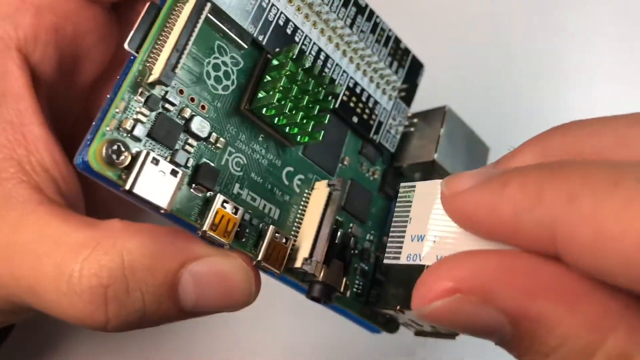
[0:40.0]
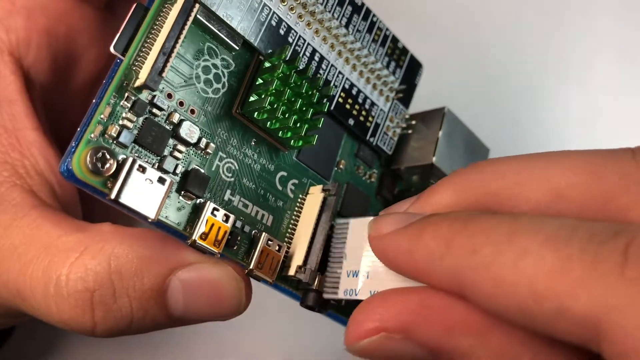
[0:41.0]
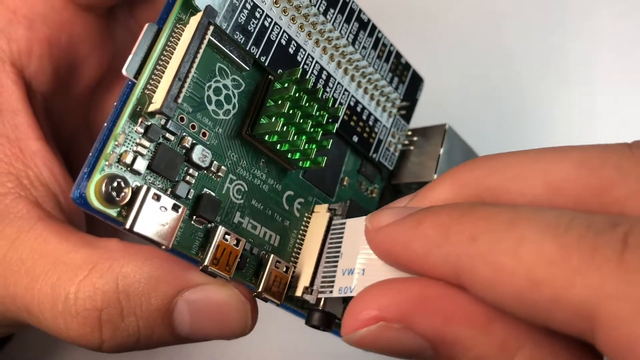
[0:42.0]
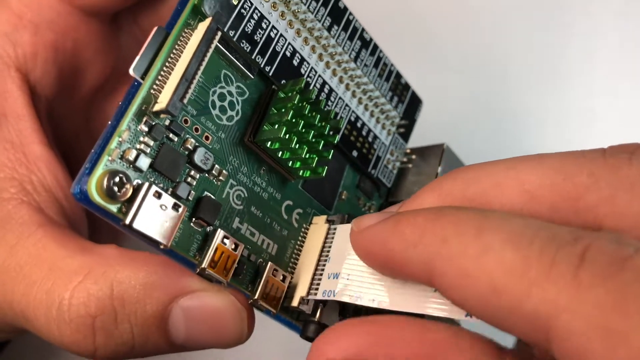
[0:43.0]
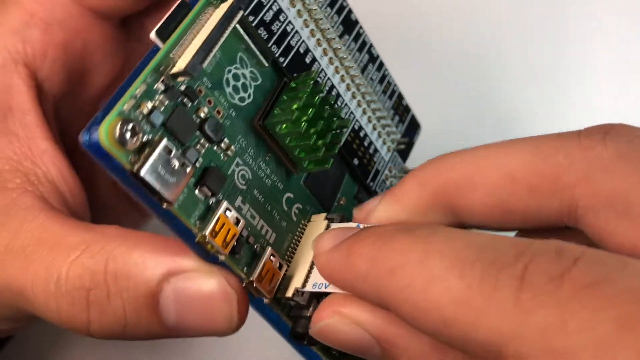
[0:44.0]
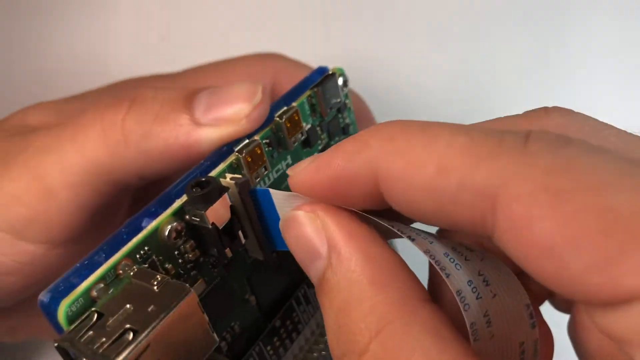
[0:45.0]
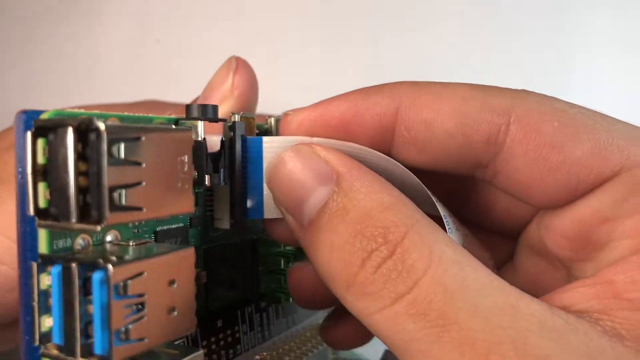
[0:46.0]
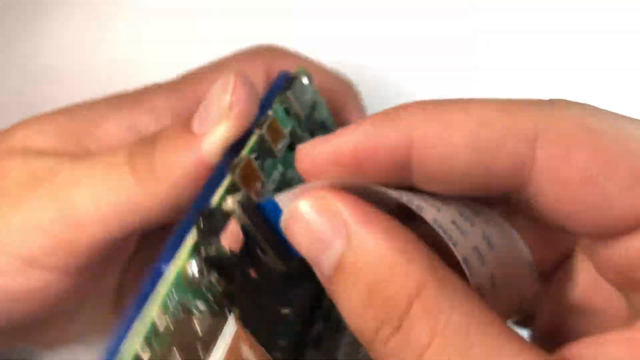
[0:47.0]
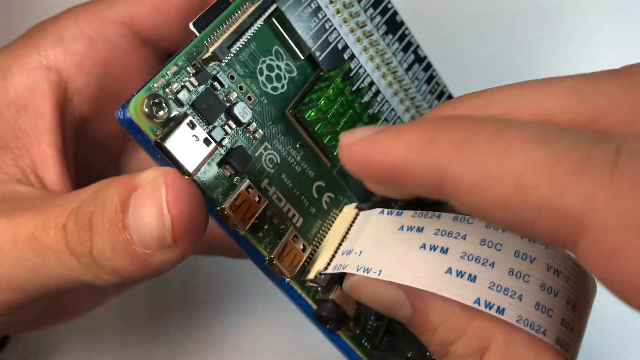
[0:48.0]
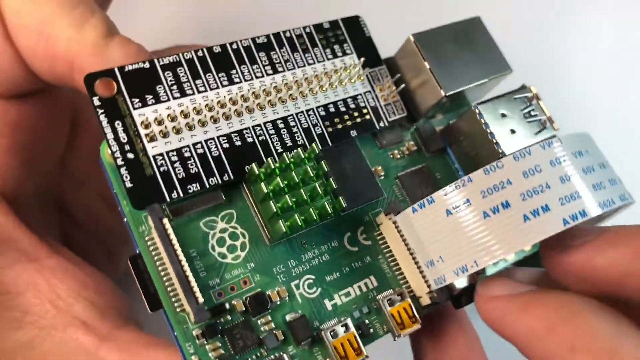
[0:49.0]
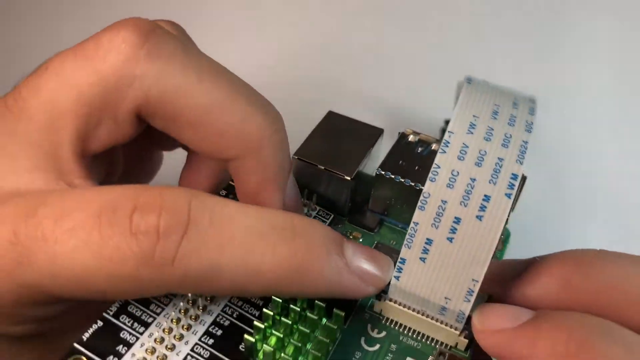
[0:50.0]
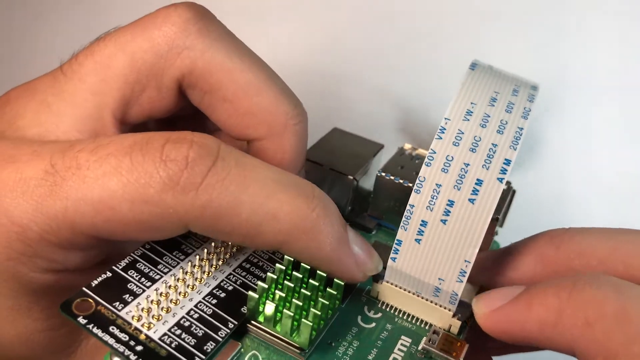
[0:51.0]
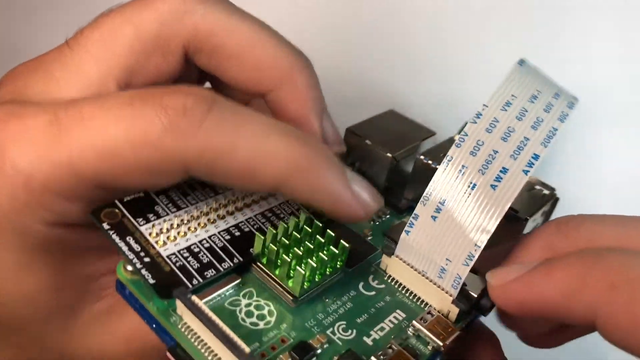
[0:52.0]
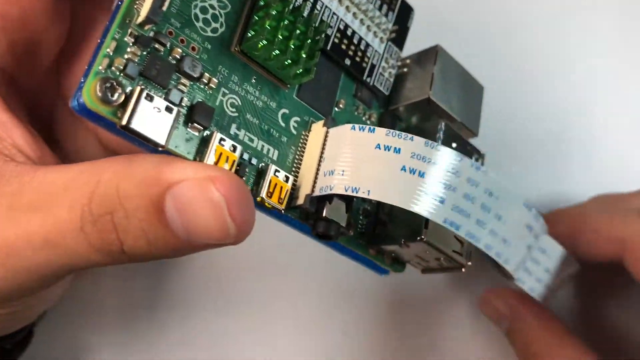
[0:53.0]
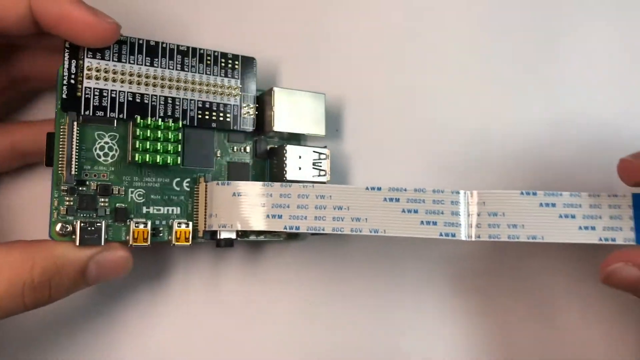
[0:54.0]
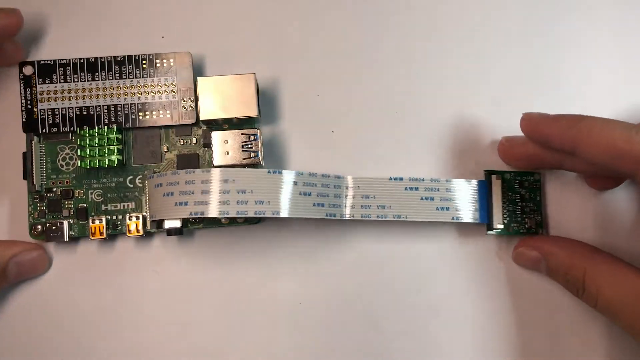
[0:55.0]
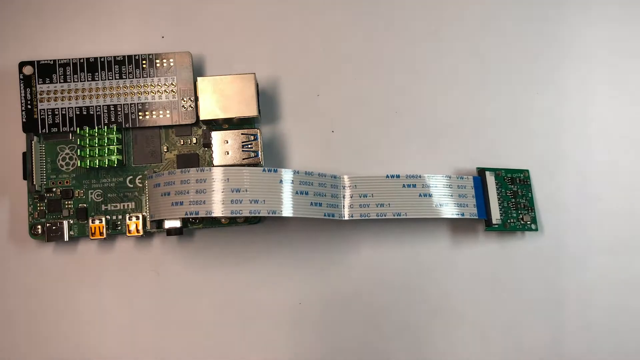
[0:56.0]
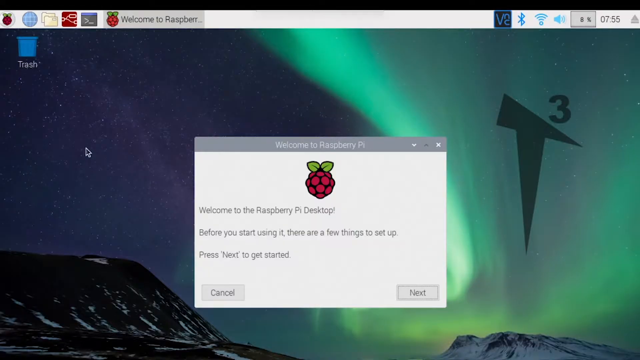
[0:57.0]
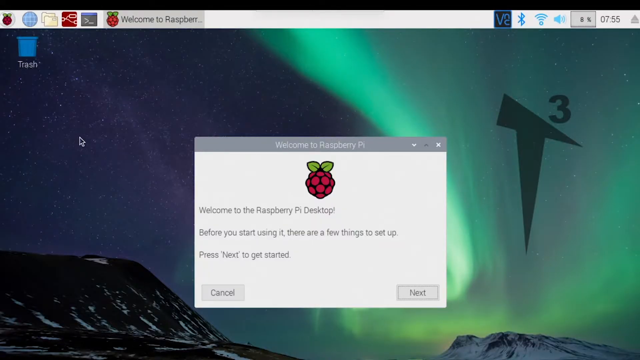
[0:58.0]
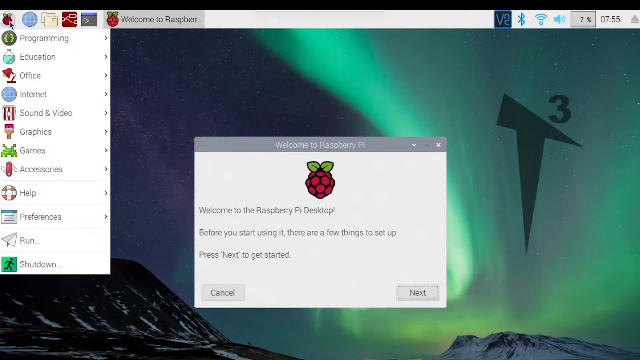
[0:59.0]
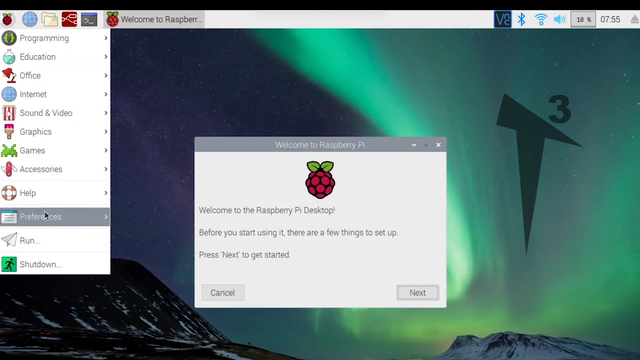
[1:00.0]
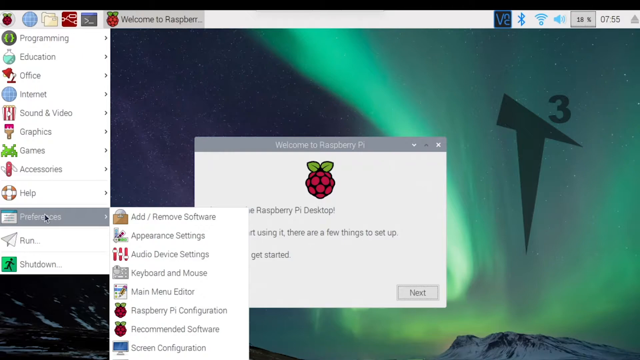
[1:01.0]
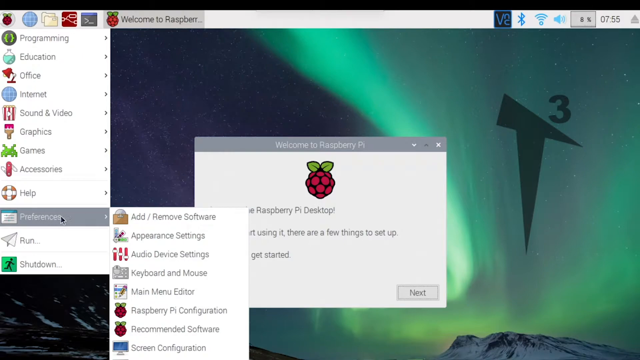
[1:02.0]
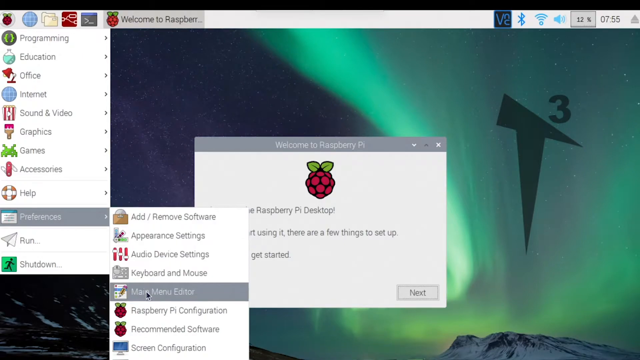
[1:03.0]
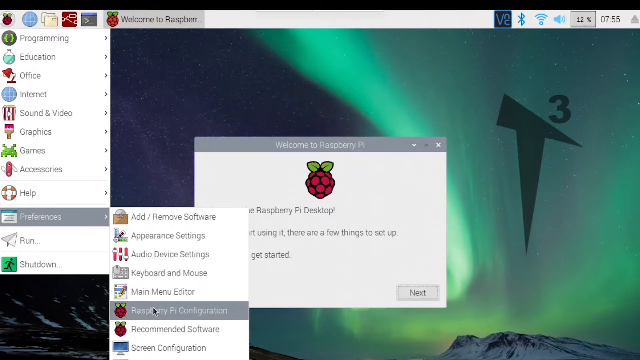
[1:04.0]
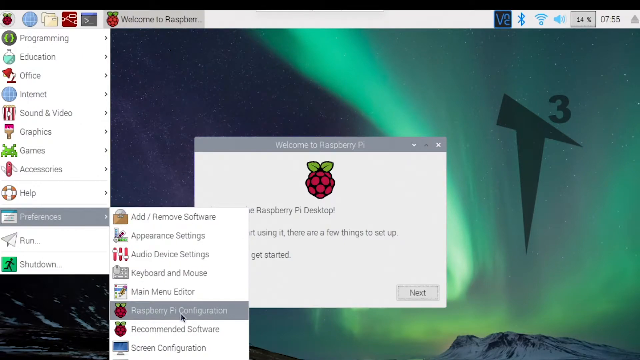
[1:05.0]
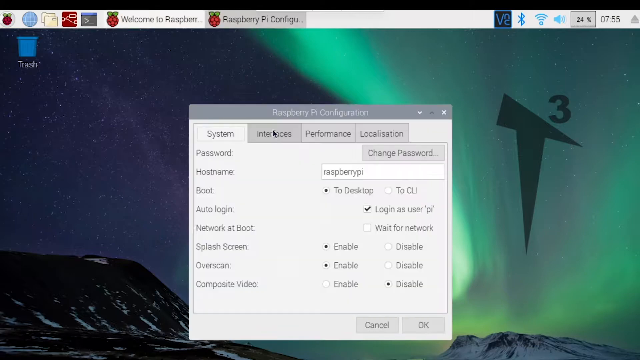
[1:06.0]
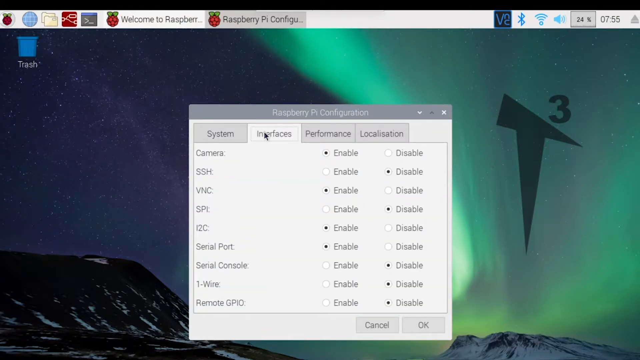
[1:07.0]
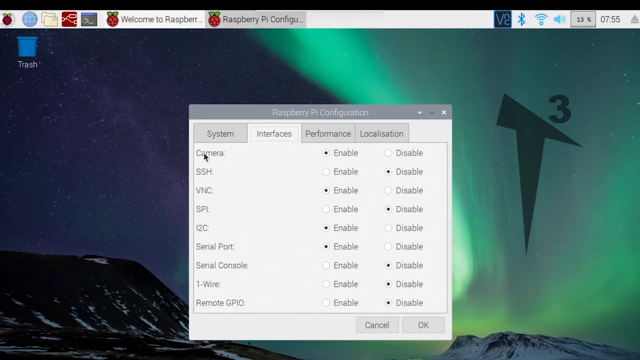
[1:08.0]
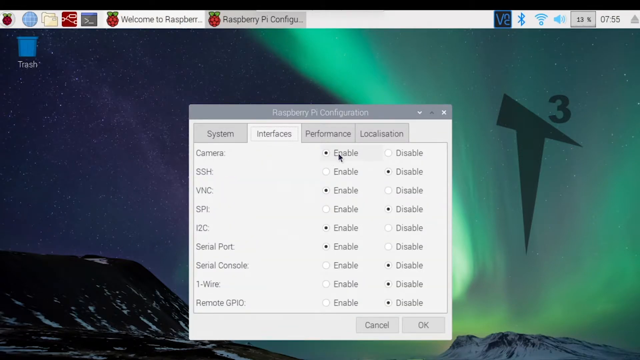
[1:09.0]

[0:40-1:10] The right thumb, index finger and middle finger are on the white piece of tape, which is held up to the circuit board while the left hand, with the left thumb visible, holds the board. The tape is put into a slot on the board. The left hand flips the board upside down as the tape is inserted, showing that the back side of the tape is white with a blue tip at its very first part. The board is flipped back to the front side, showing the tape now inserted, and the left index finger checks its placement. The board is flipped over again and placed on the table, where the right hand holds the end of the tape before the thumb and index finger are removed. The screen then changes to show the text "welcome to the Raspberry Pi desktop. Before you start using it there are a few things to set up please press next to get started". The background of this computer screen shows the Aurora Borealis in a blue night sky with stars, a mountain, and a pickaxe shape with a three above it.